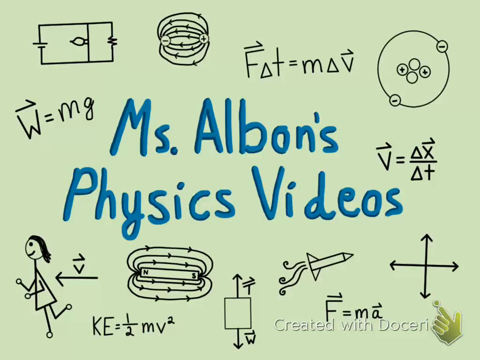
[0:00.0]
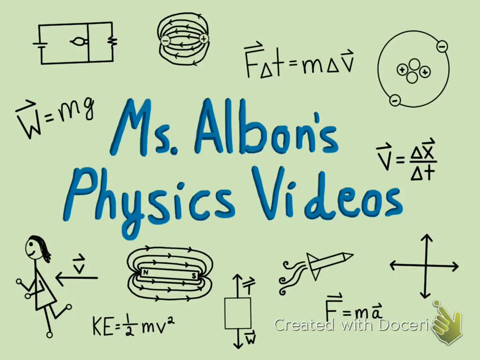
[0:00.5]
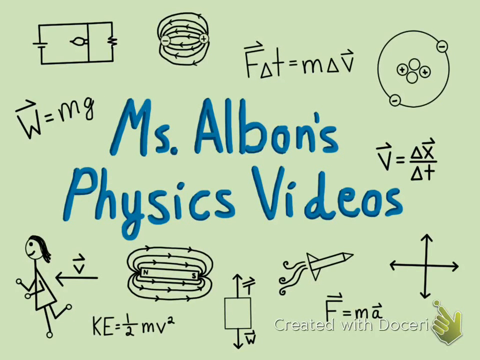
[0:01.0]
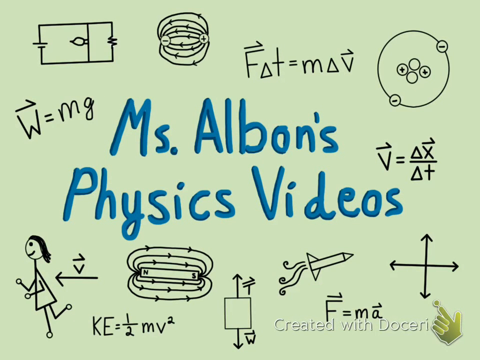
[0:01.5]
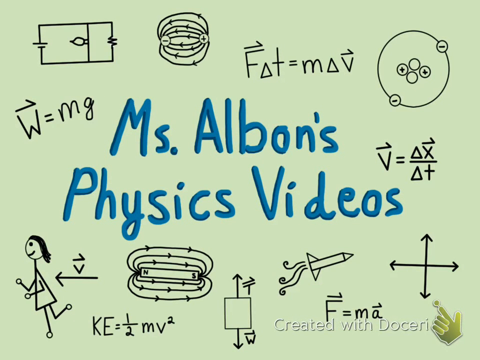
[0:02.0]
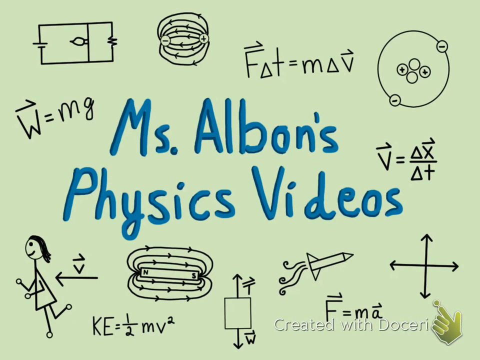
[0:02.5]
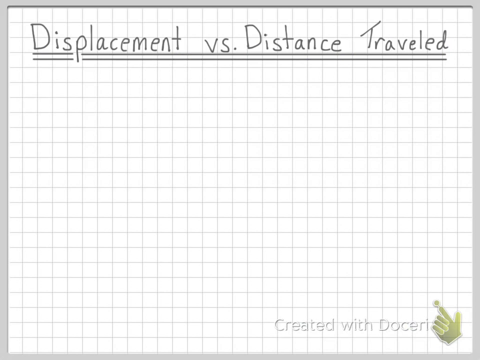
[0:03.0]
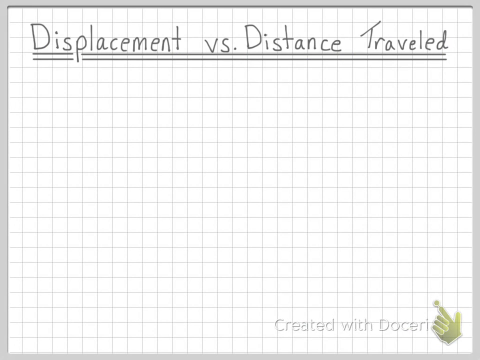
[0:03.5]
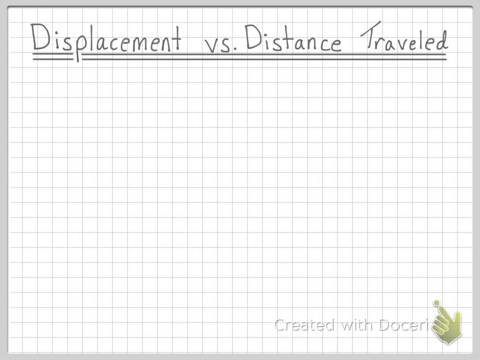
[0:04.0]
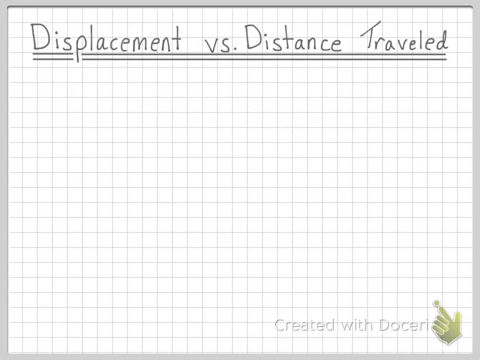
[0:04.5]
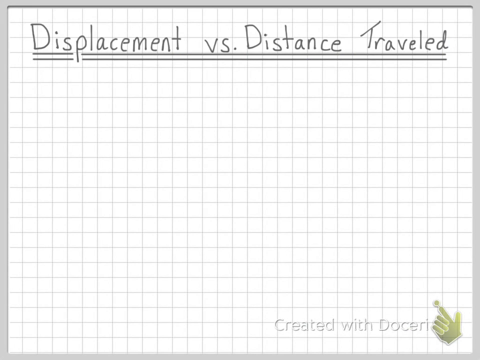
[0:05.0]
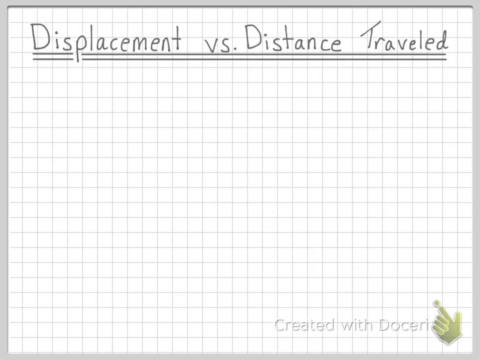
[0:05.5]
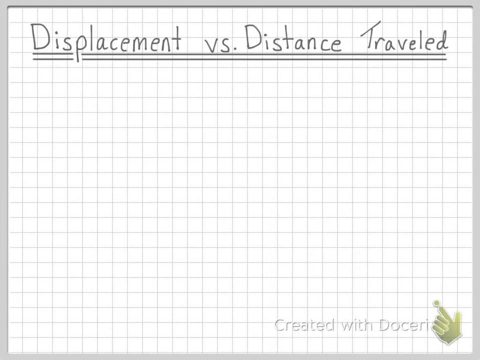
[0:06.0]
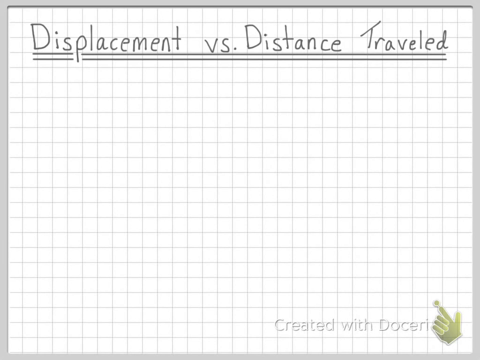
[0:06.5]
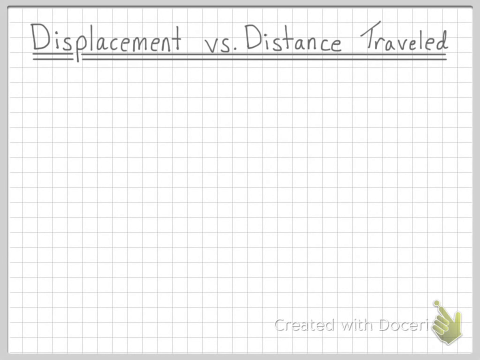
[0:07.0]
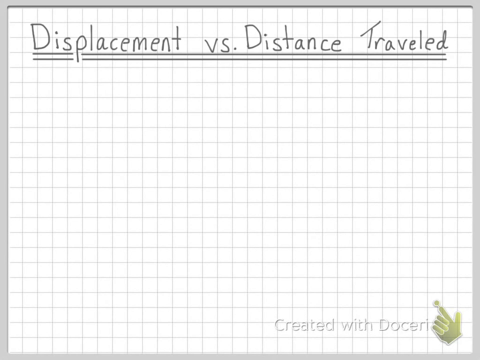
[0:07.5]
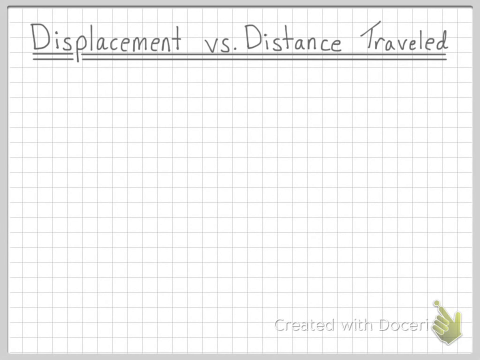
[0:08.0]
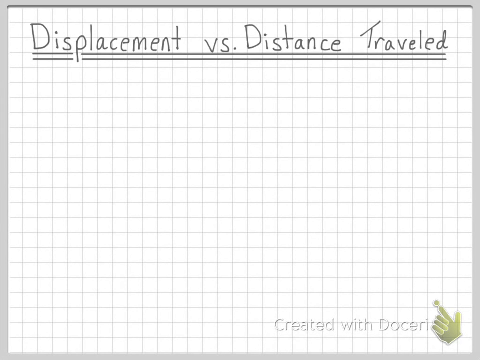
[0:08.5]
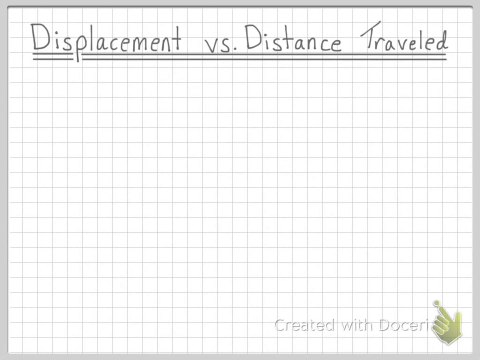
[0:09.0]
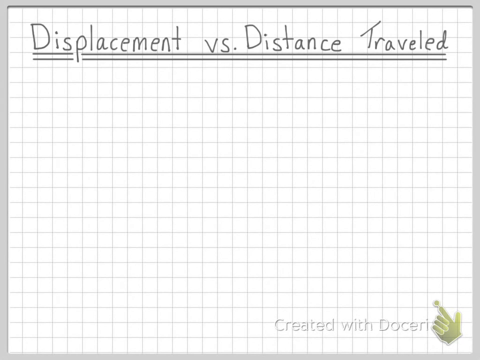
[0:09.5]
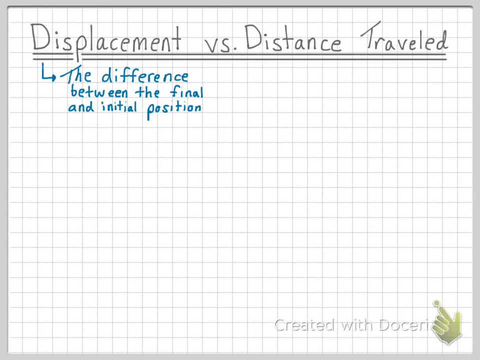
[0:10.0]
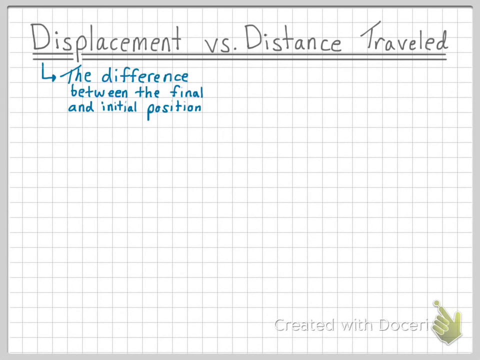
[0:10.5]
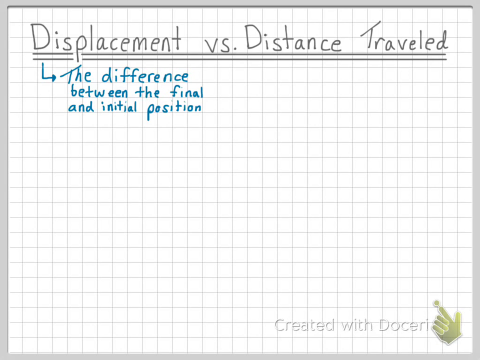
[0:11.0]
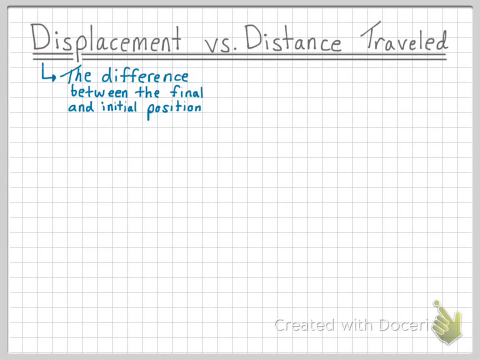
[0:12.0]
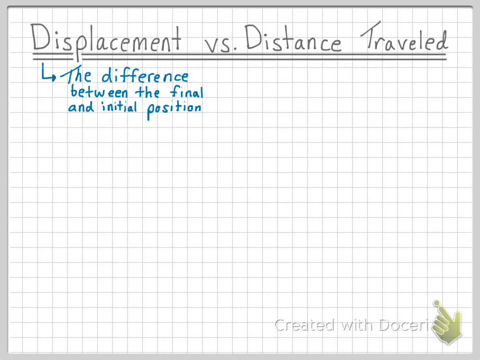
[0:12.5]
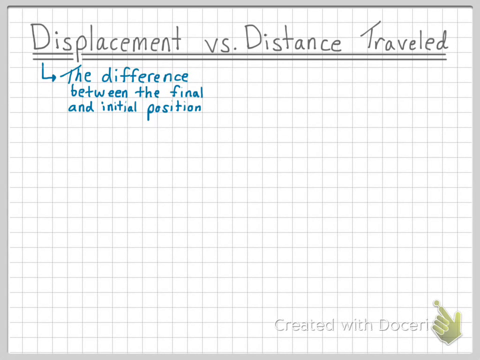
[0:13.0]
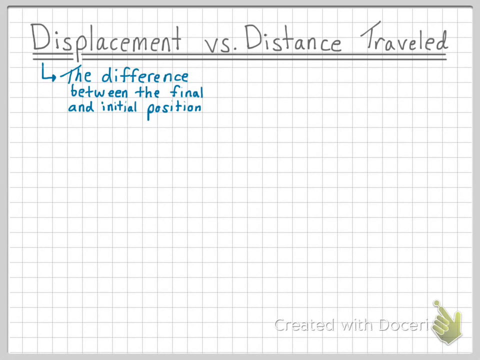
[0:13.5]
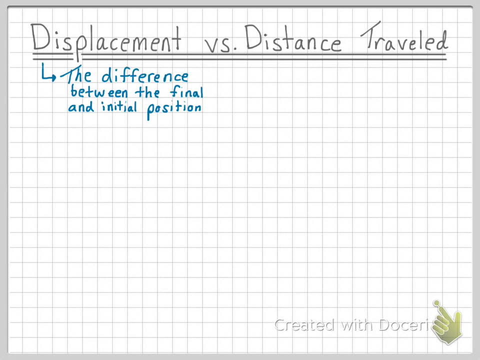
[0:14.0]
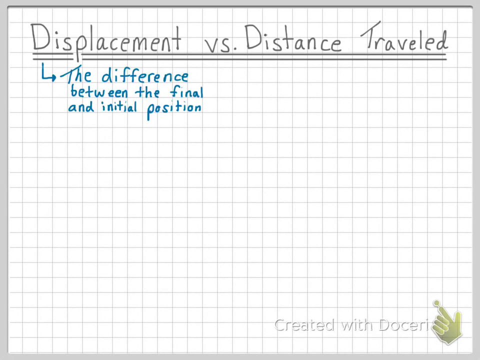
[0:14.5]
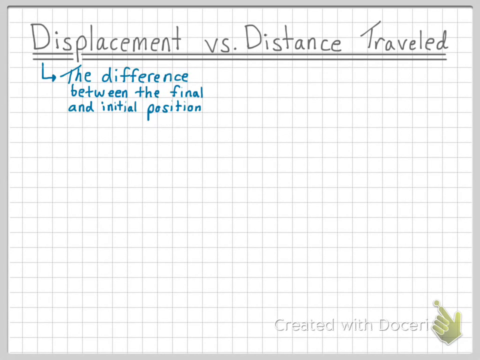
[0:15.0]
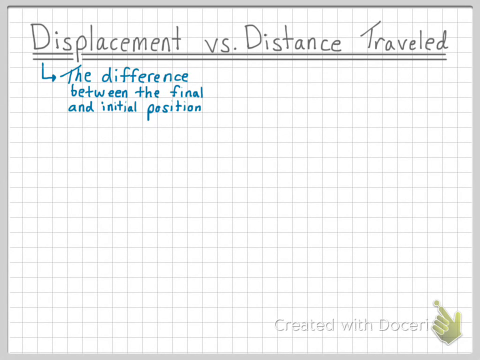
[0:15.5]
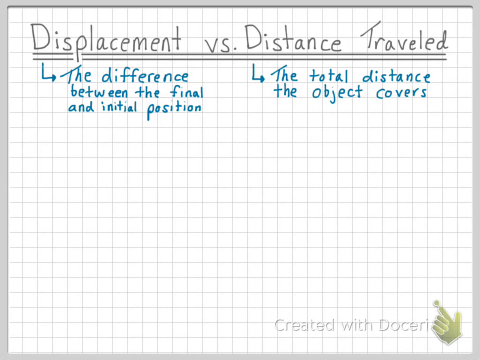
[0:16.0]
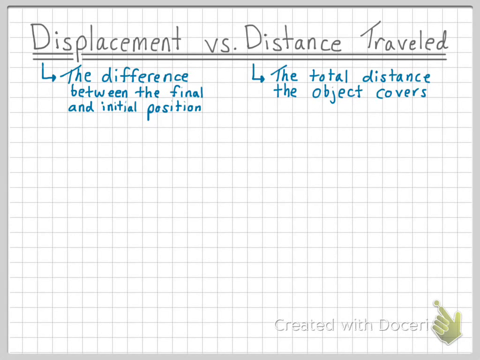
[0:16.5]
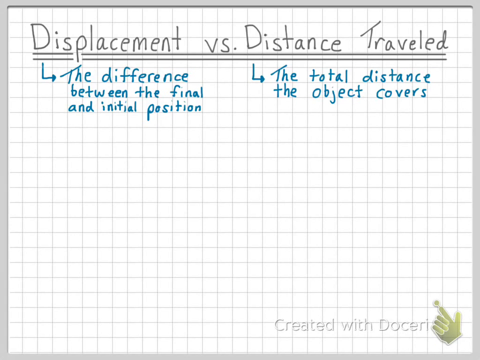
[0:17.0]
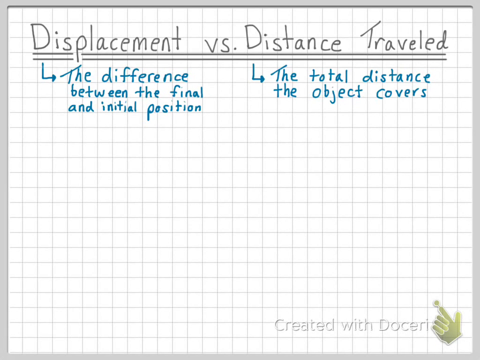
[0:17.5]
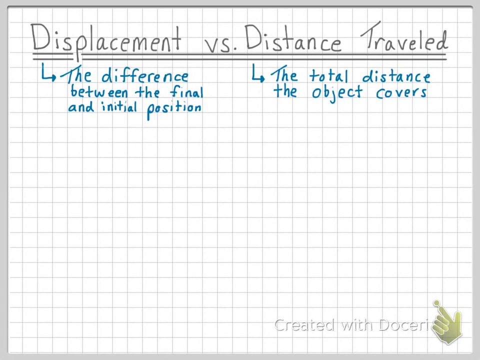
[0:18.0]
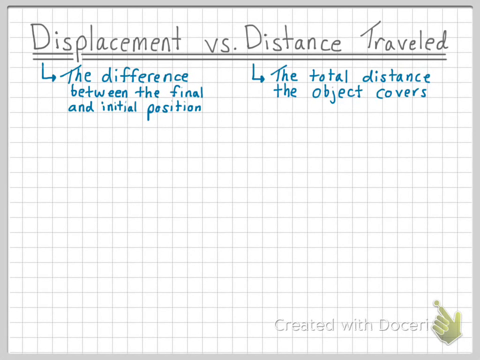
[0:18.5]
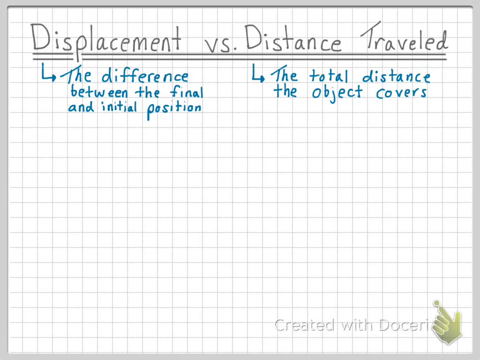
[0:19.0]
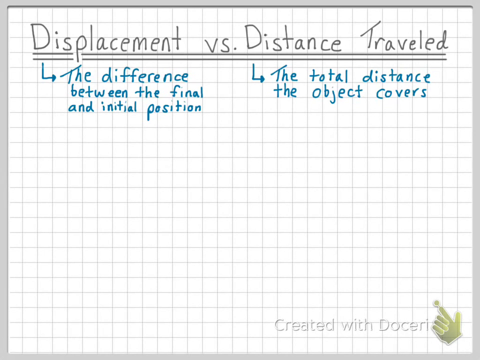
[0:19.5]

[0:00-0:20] A white grid board shows the words "displacement versus distance traveled" at the top, underlined twice, with definitions beneath them: the difference between the final and initial position is displacement, and the distance traveled is the total distance the object covers. In the bottom right corner there is something like a hand pointing at a dot, apparently a "Doceri" watermark. A title screen then appears reading "Miss Albom's physics videos", written in blue marker, surrounded by several diagrams, such as a rocket, a woman running, some formulas, and positive and negative electrons and what may be neutrons. The diagrams and formulas look like they are in black pen.